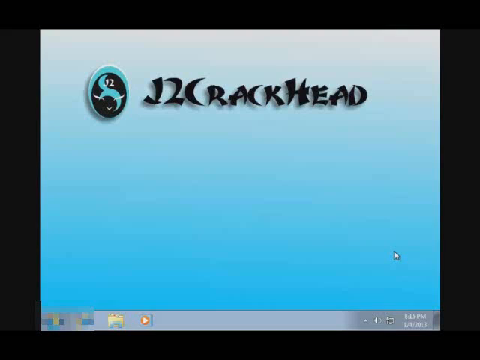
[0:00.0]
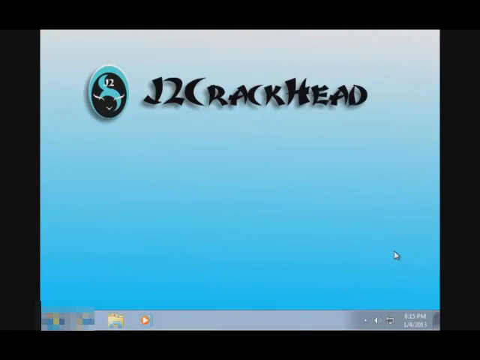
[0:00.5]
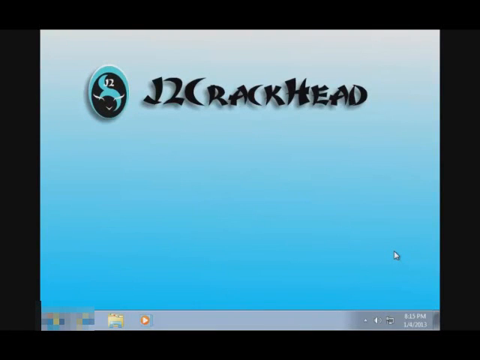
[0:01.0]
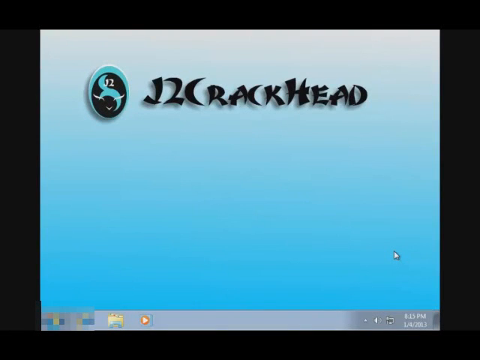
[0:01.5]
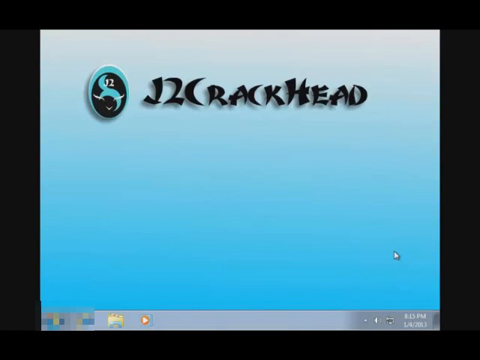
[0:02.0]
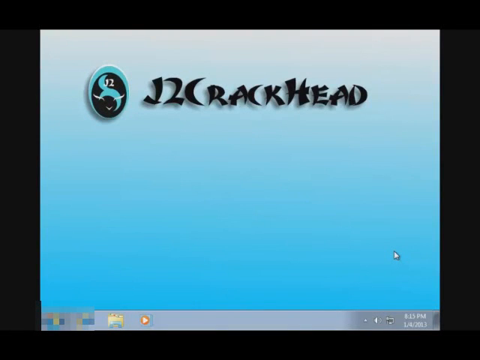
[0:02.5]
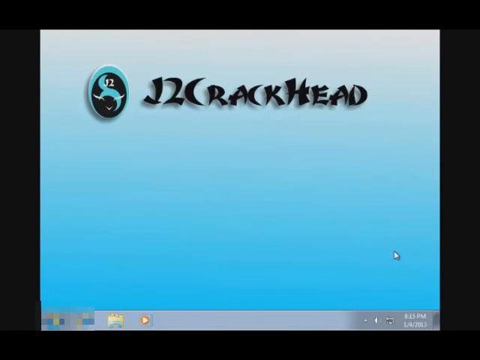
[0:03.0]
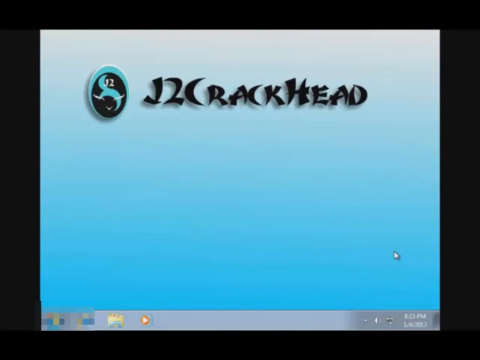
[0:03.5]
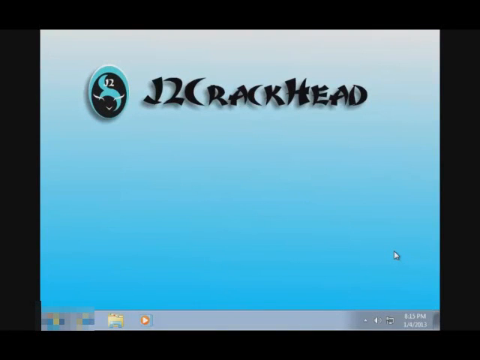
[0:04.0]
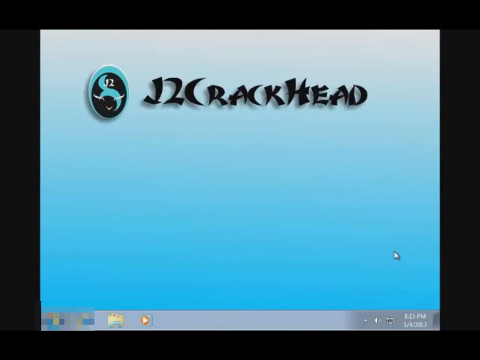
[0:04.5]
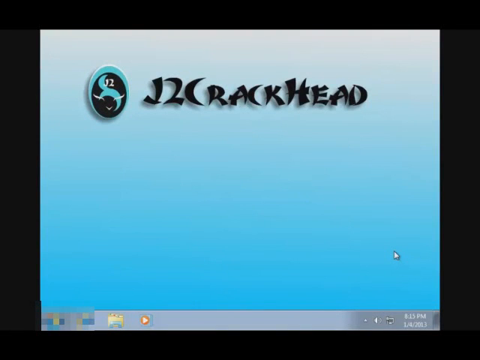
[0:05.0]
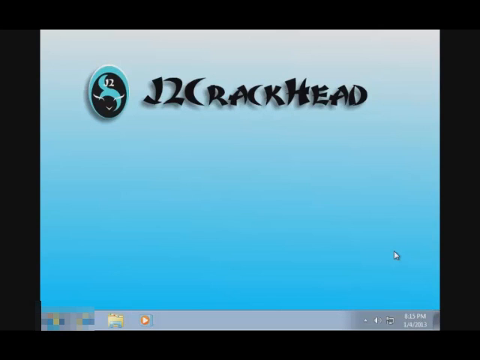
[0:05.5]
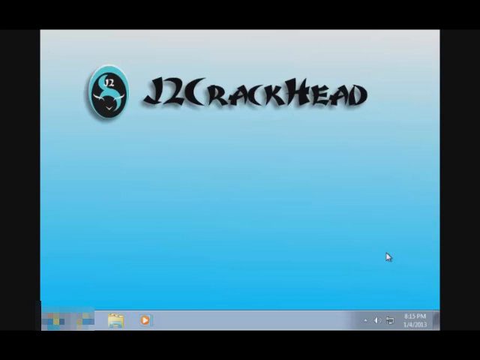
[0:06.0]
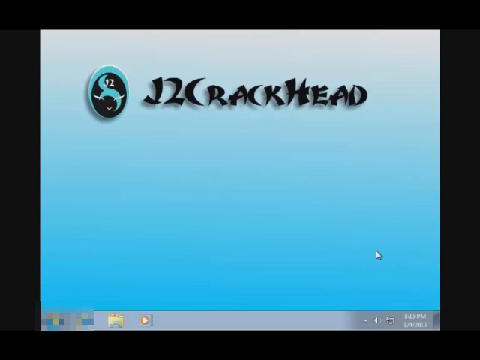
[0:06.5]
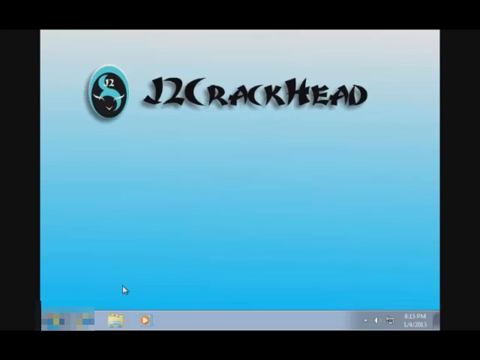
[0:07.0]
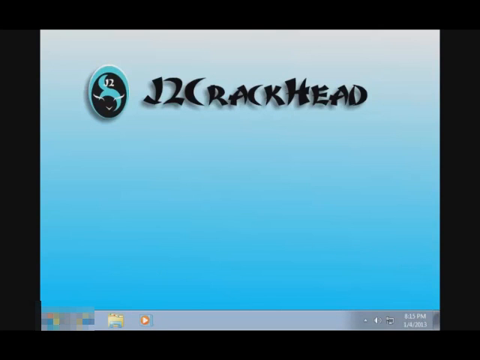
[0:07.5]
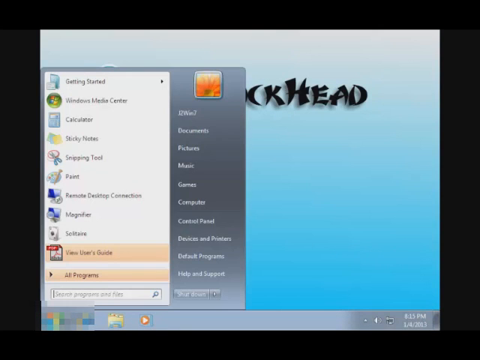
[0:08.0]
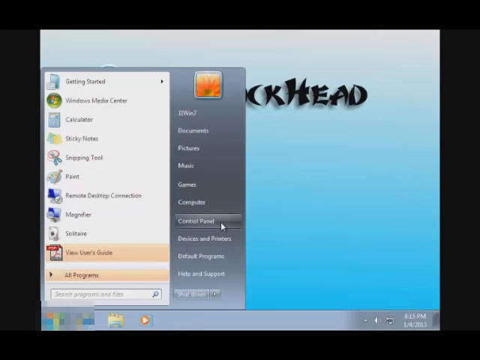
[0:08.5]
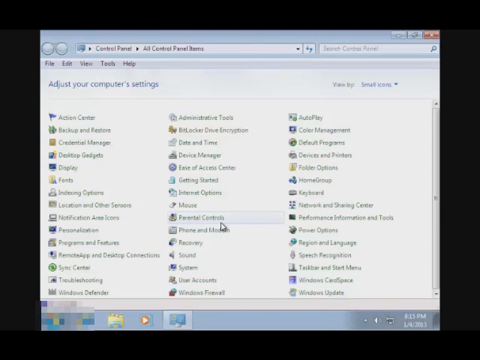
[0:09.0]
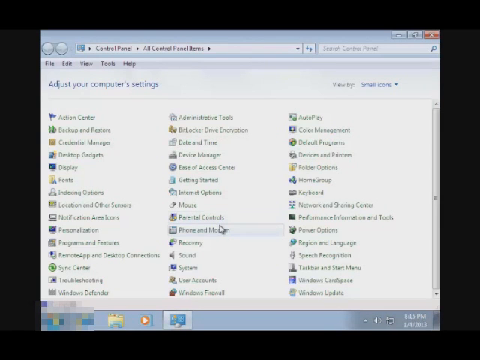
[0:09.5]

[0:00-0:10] The background stands out at the bottom and gradually gets lighter toward the top. The text "J2 Crackhead" appears in a fancy, apparently Asian-style font. Beside the text is a small image, apparently a blue coin of some sort that says "12th"; what is pictured on the coin is unclear, but it possibly shows a dark-colored anime character with blue hair. The image is essentially a still picture.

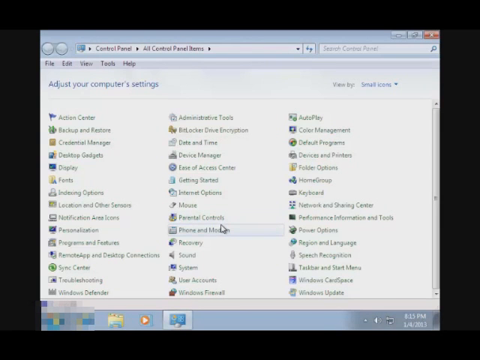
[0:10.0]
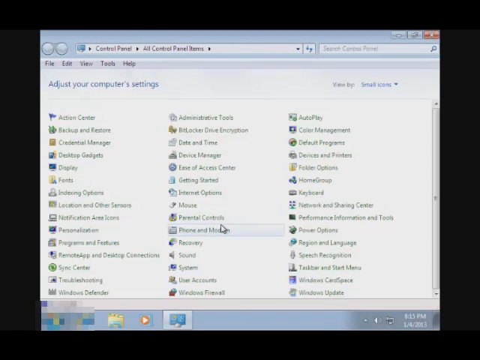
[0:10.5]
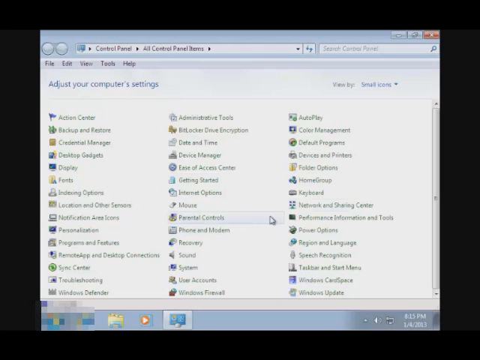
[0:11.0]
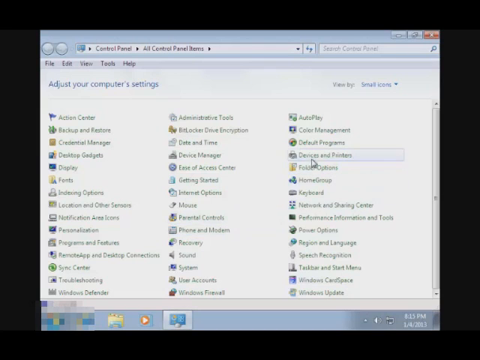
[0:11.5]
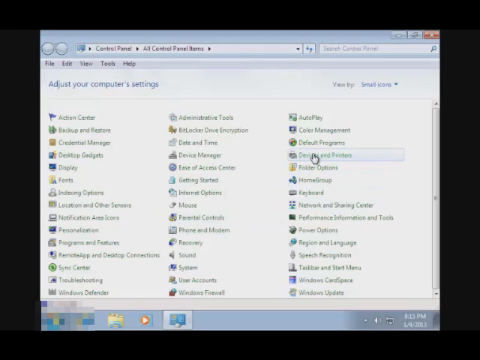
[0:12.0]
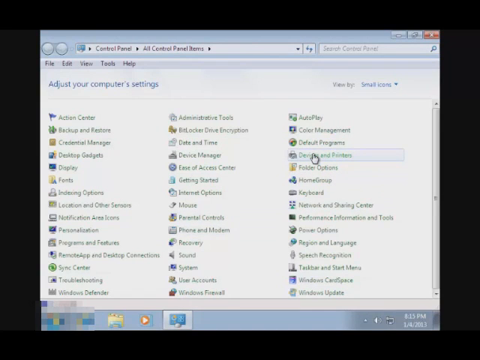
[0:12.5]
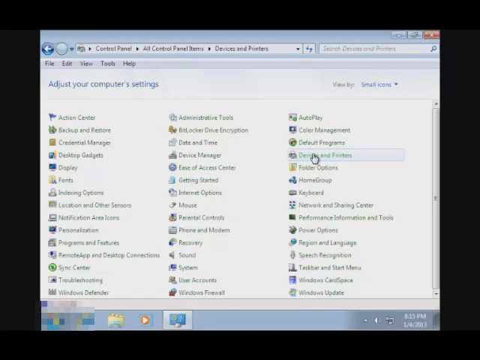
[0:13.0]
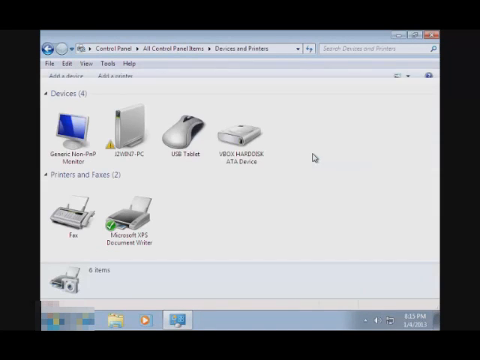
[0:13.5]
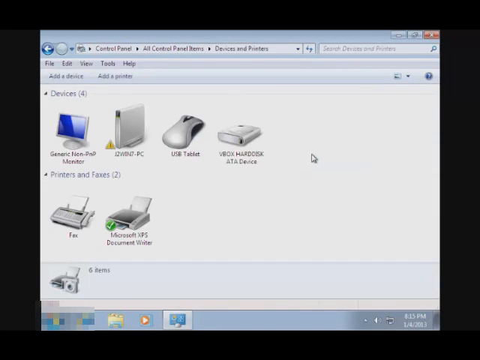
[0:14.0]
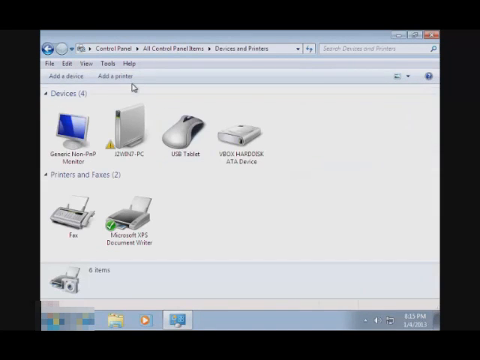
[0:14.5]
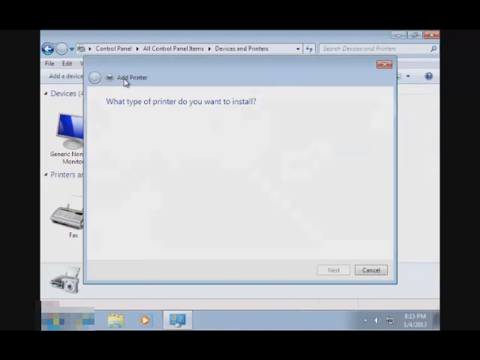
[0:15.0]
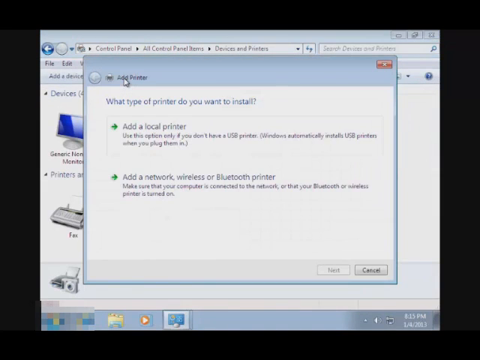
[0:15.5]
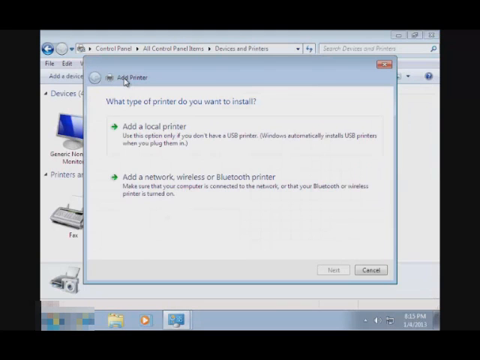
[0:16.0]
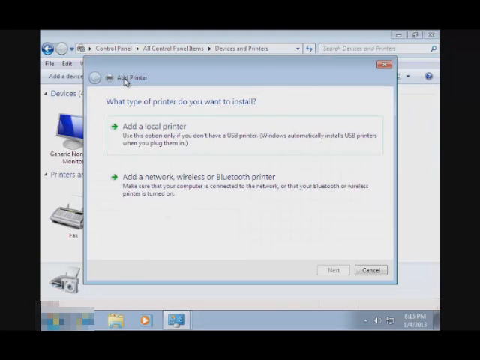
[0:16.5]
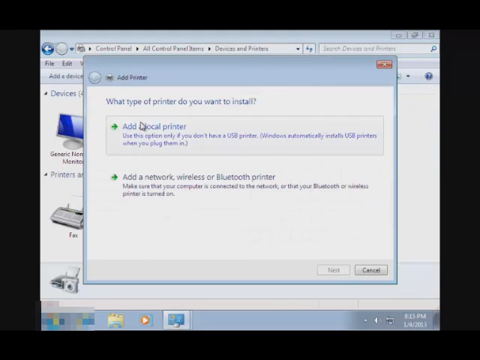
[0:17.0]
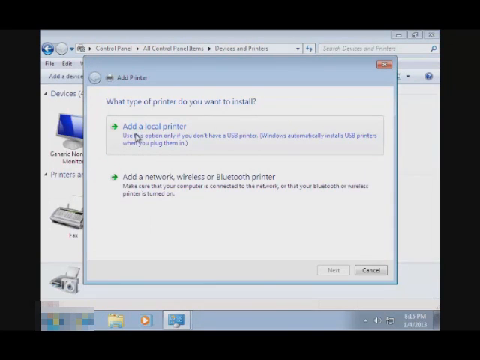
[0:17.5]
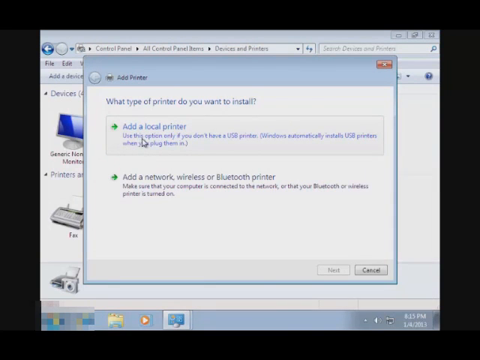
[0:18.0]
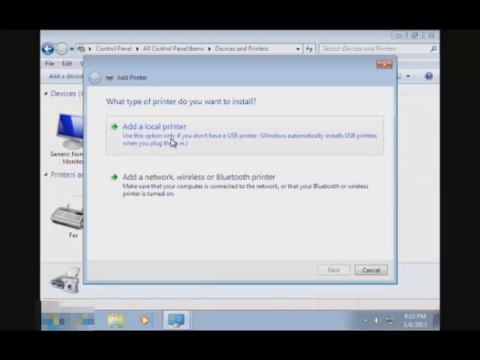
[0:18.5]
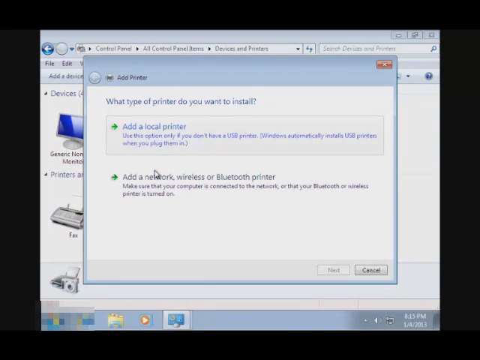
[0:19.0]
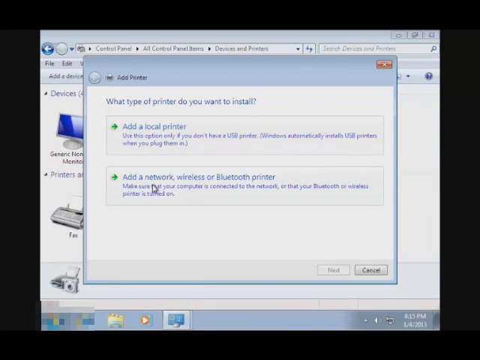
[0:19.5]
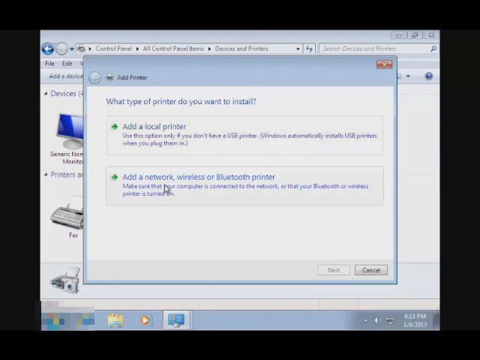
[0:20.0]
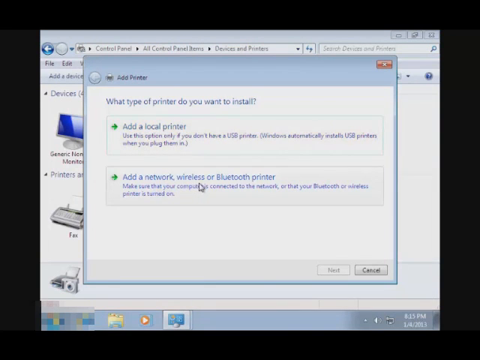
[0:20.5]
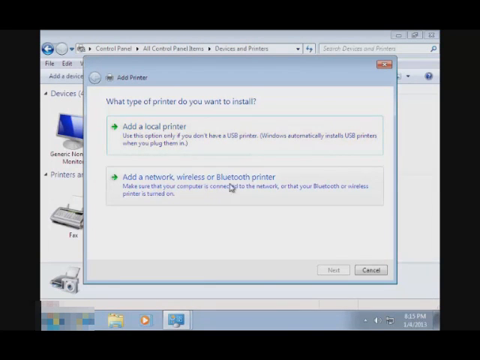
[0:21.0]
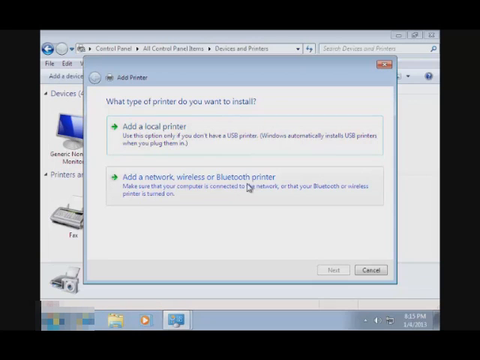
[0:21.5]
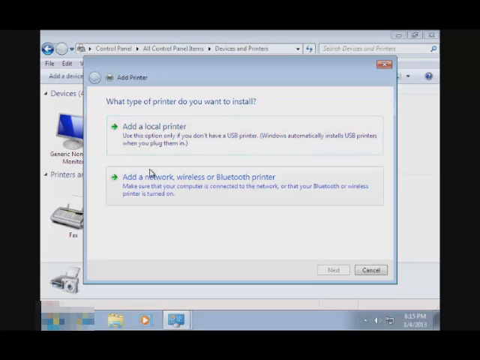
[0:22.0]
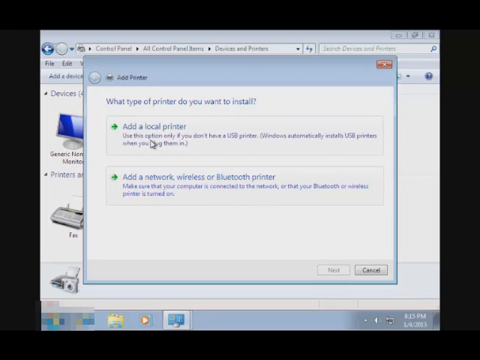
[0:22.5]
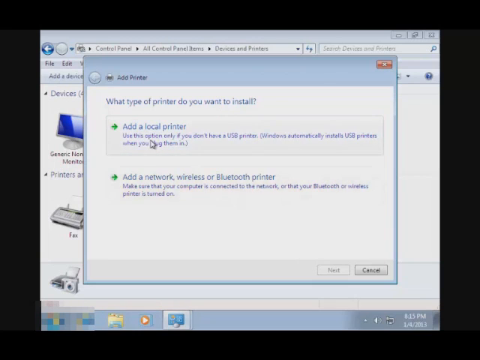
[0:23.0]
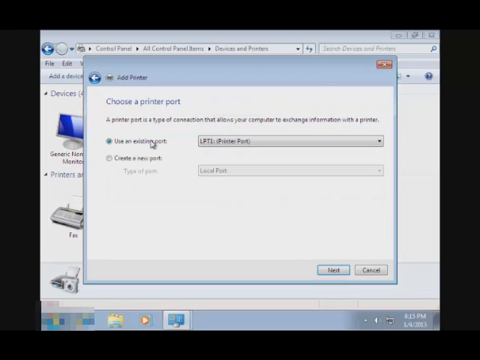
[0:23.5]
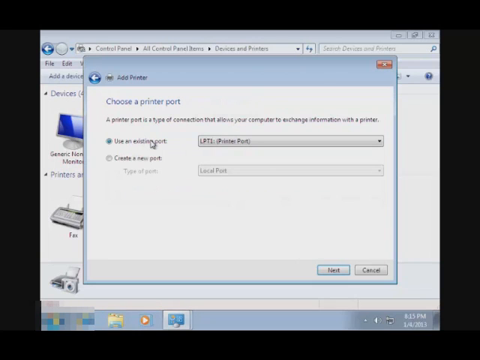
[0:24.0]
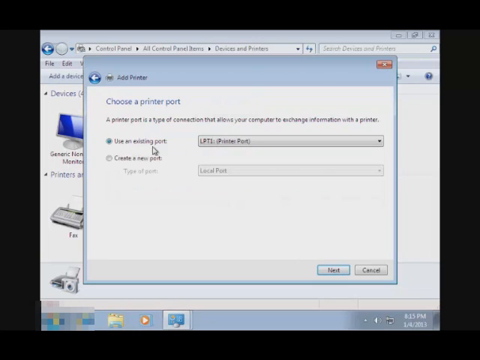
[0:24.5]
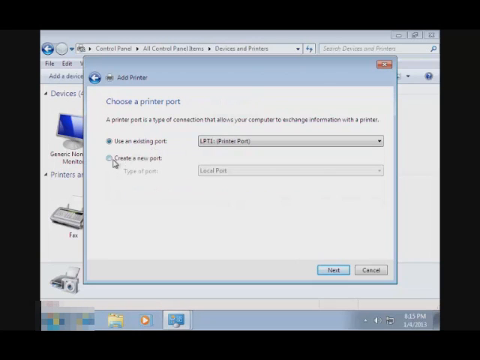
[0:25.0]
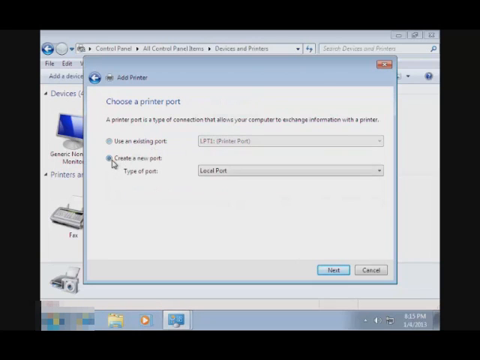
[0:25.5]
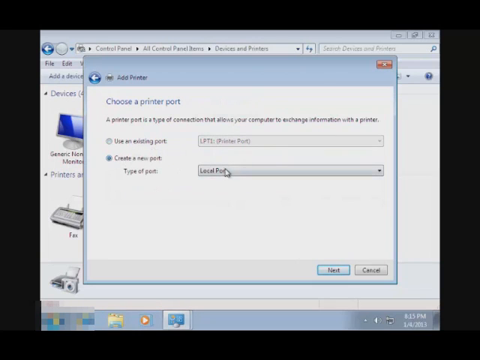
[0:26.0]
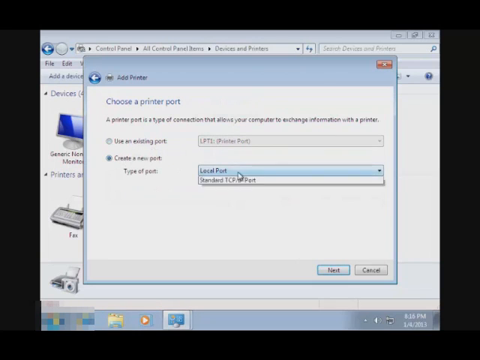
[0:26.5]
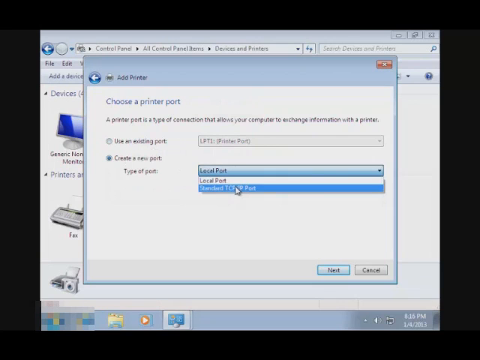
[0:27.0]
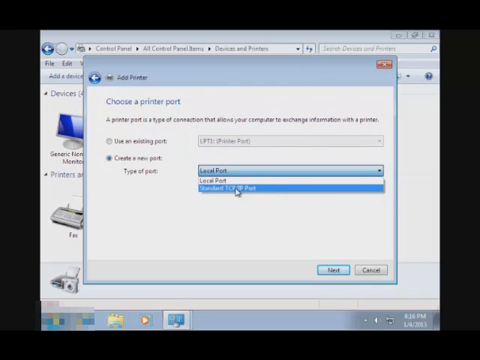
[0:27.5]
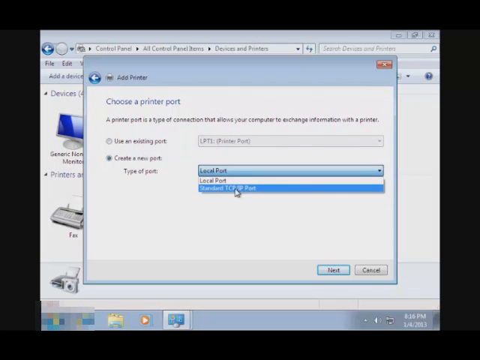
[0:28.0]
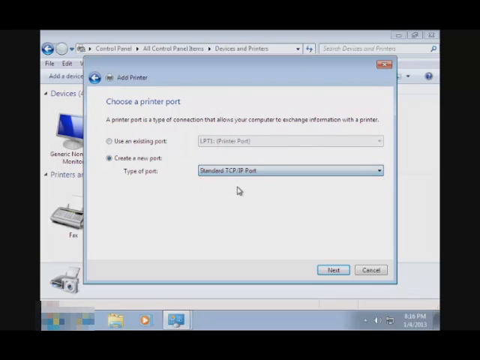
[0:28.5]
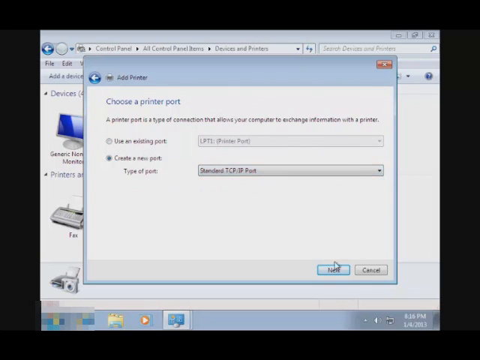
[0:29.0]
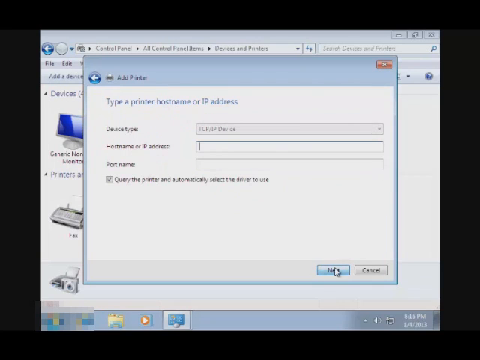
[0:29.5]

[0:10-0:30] What looks like an open Explorer window on a computer appears, and someone checks through the Explorer or the settings. They flip the page in the Windows Explorer window view and reach the devices and scanners and printers screen. They move toward the options to add a local printer and to add a network or Bluetooth printer, apparently trying to add a printer to the computer, and go through the steps of clicking where to get the files. Another screen pops up reading "adjust your computer settings," and they remain in the menu, looking around. Having already installed a printer or submitted the last printer settings, they return to the main settings to make more adjustments. It looks like they are installing a wired printer rather than a wireless one.